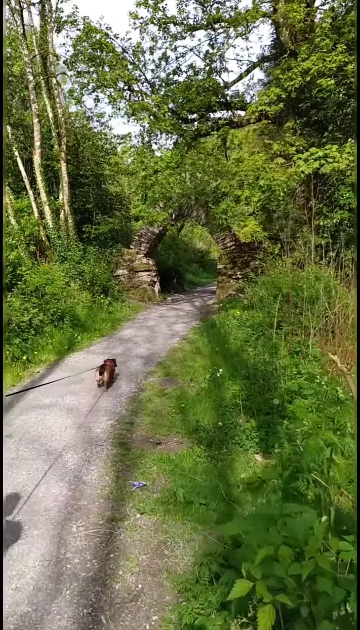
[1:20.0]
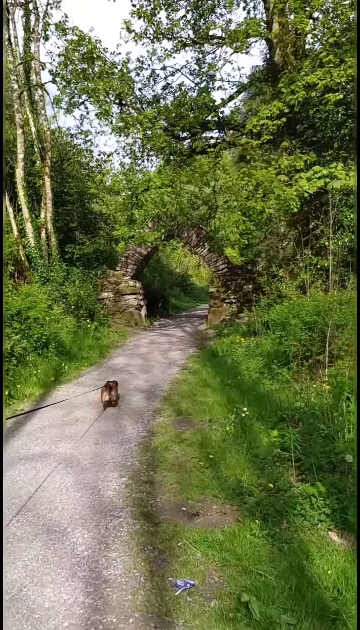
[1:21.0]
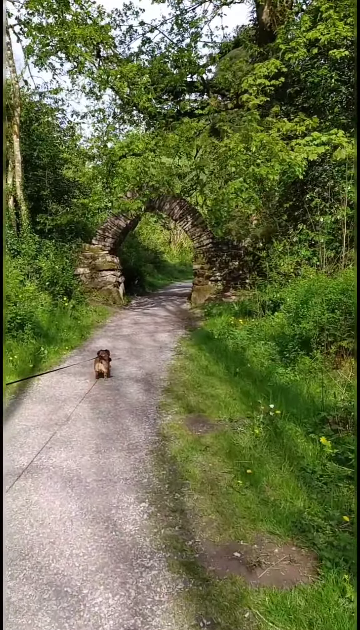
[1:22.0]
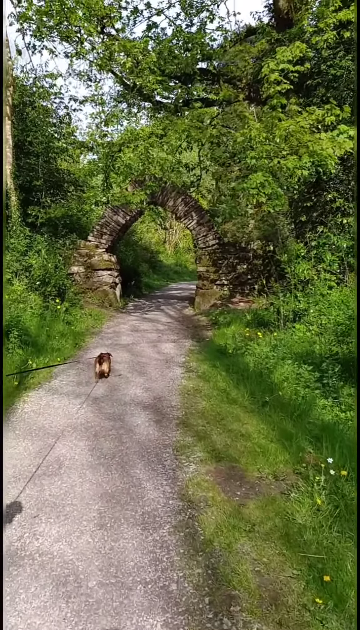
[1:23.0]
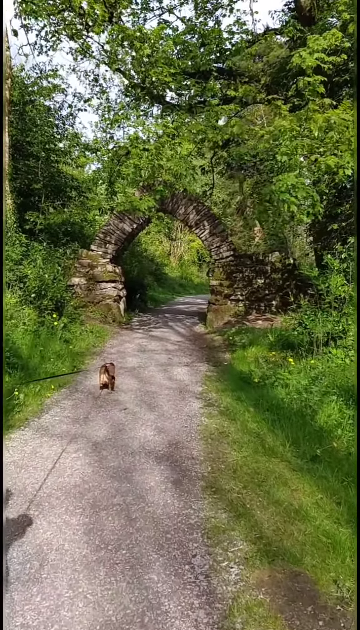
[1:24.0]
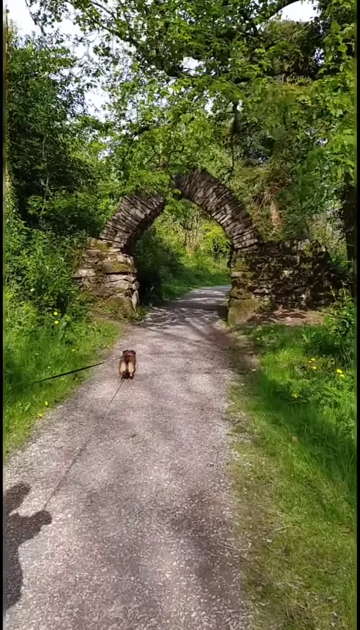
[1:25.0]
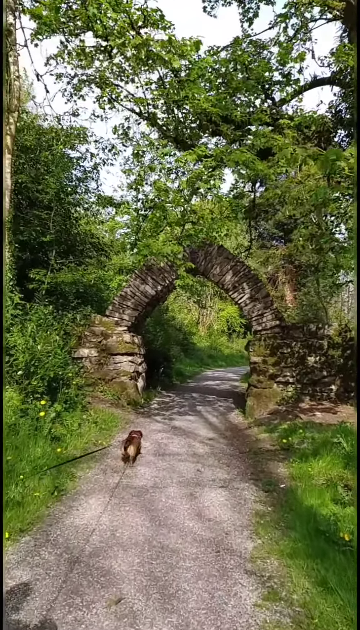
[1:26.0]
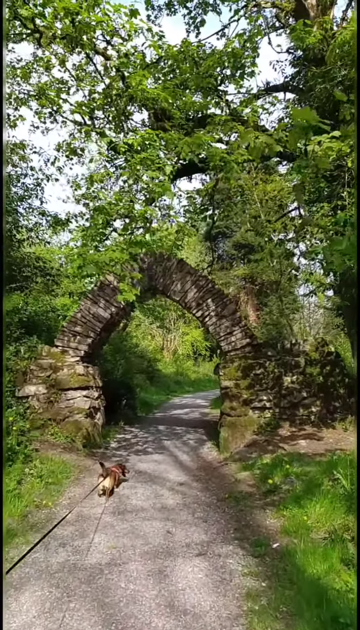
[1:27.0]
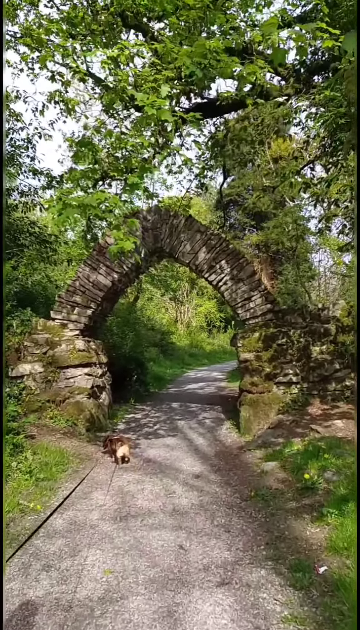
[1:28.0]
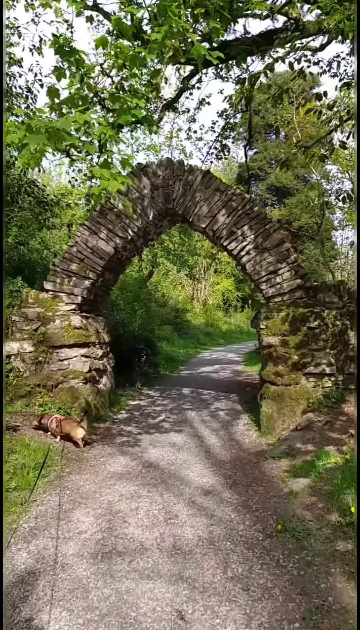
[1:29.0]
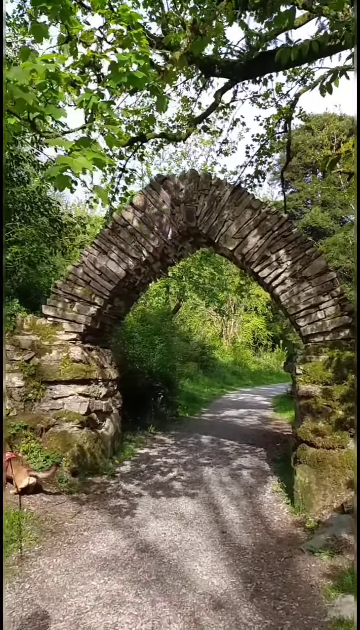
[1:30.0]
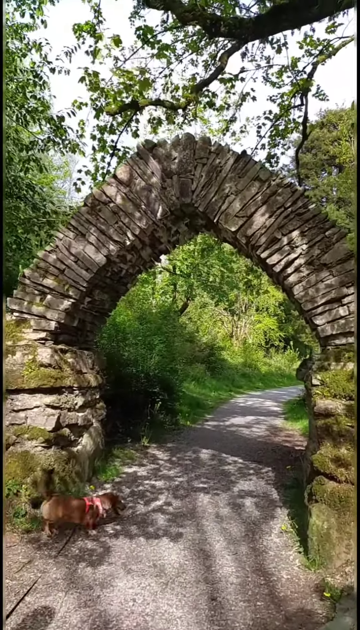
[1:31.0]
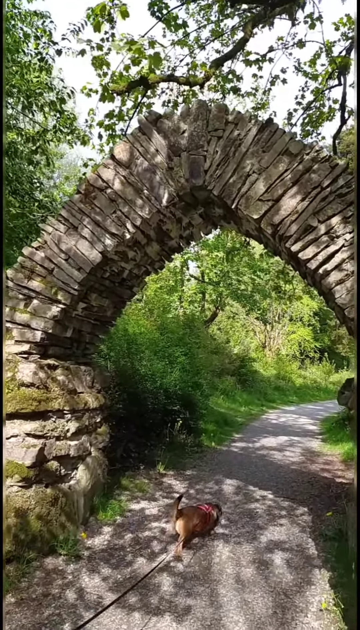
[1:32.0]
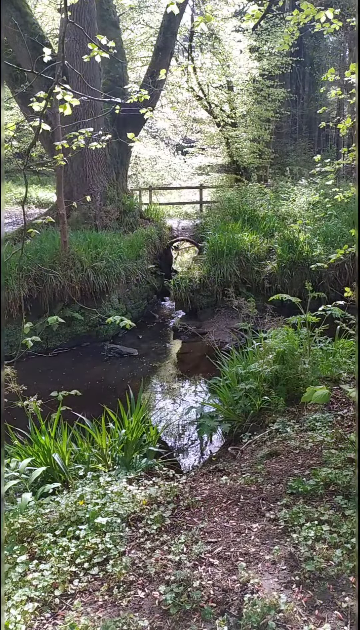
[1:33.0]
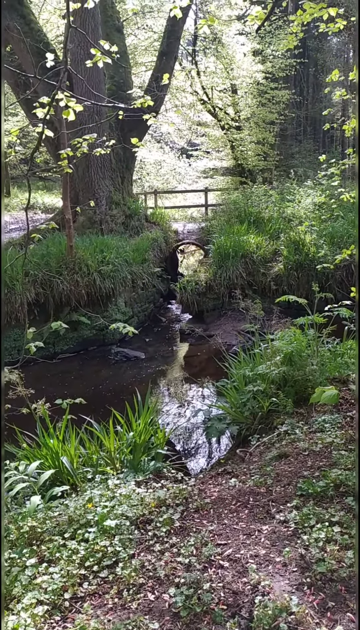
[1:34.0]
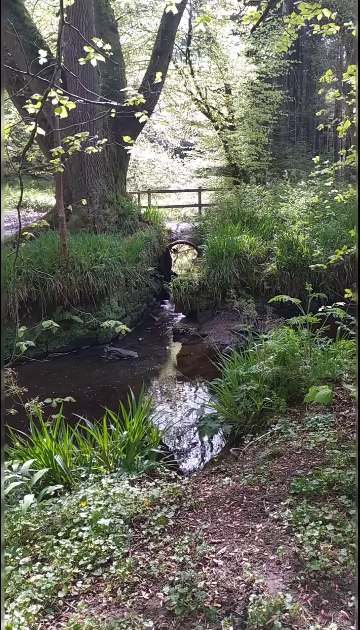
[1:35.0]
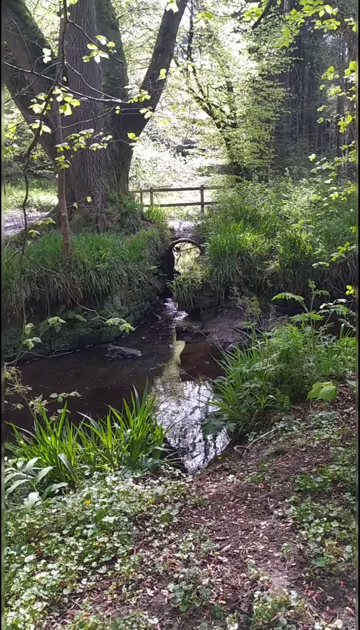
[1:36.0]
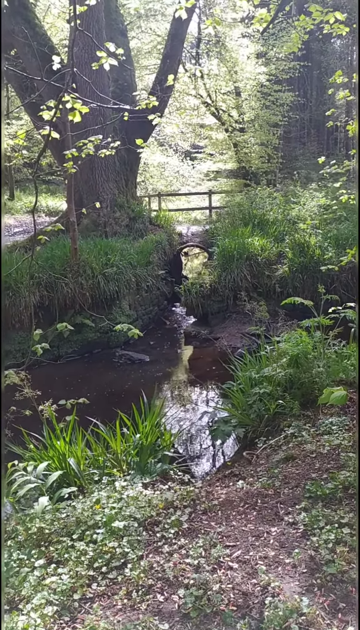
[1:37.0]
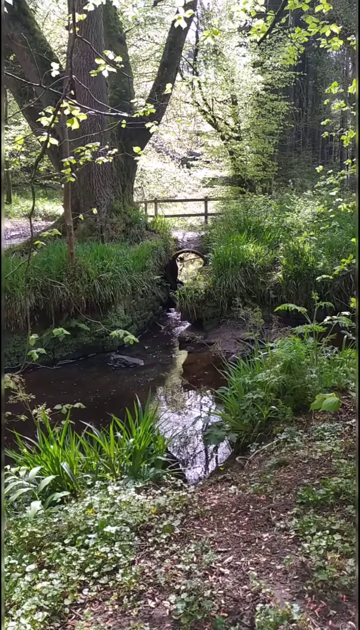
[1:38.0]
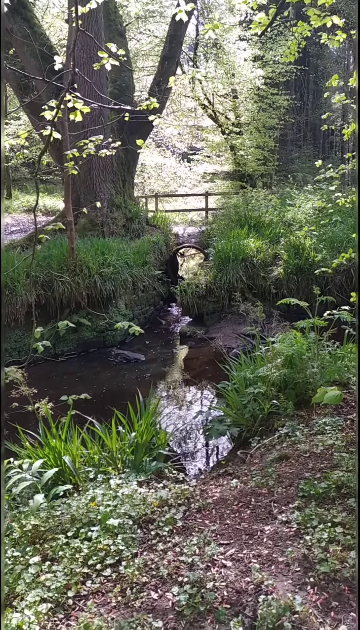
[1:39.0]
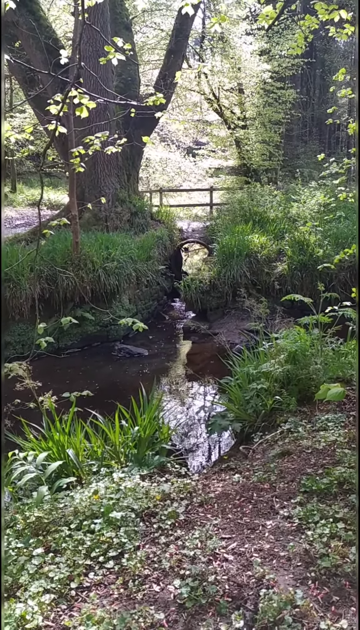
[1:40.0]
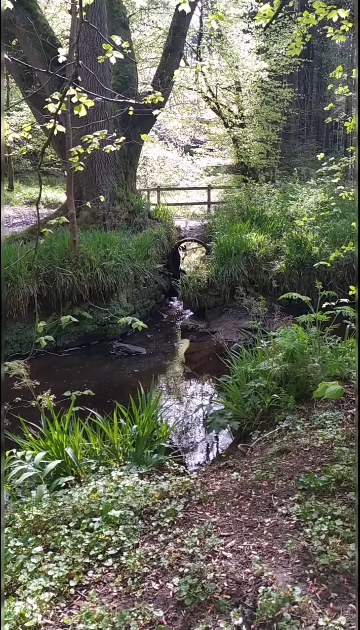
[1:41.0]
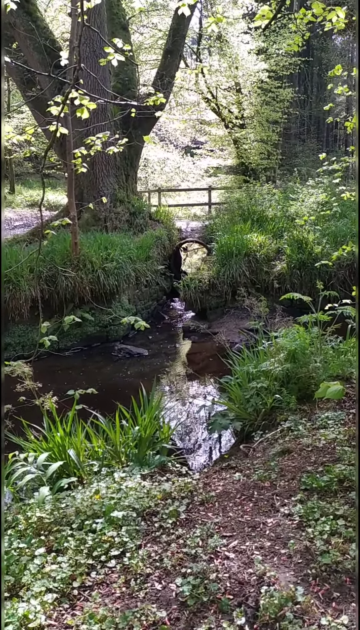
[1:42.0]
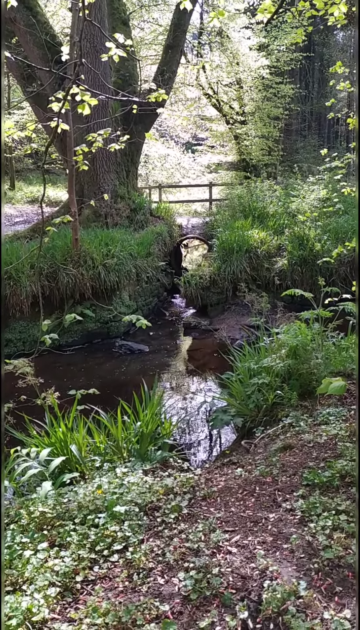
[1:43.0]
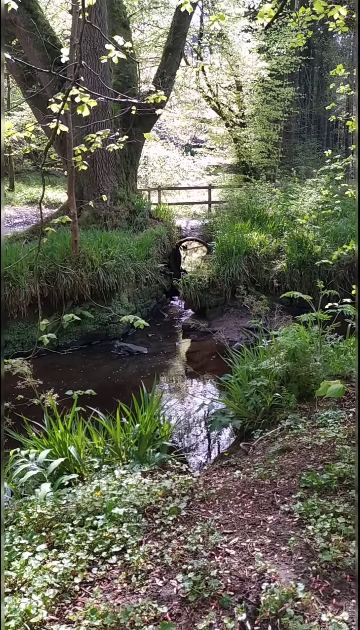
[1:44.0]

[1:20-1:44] The person walks toward the archway ahead. The animal now appears to be a small dog, and what appears to be a leash is visible, seemingly held by someone off-frame to the left. As the small dog reaches the archway, it goes off the path toward the left, then goes back onto the path. The archway appears to have a stone base overgrown with moss and comes to a somewhat sharp point at the top. The dog passes under the archway, and a flash of light transitions to another scene: another creek with what appears to be a small tunnel underneath a small section of land. Beyond the tunnel is a fence; to the left, a tree comes out of an outcrop of land, and to the right is a larger wooded area. Light appears to shine through the area in the center. The camera lingers on this scene for a moment, showing the sparse movement of the grass and the leaves.